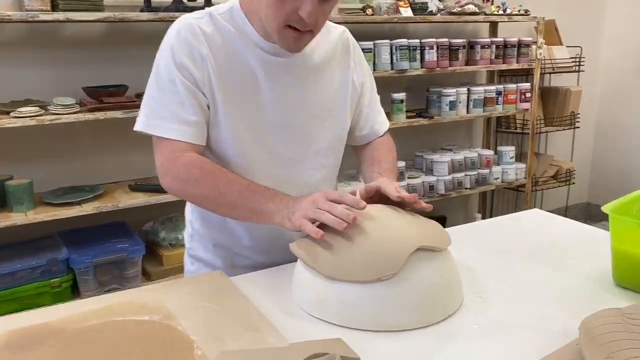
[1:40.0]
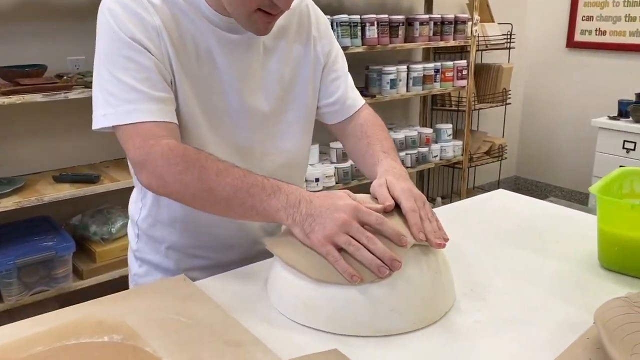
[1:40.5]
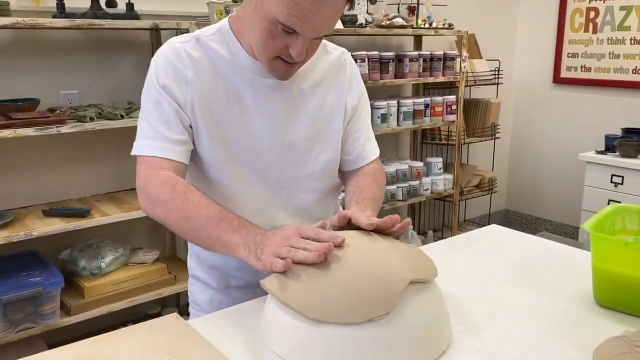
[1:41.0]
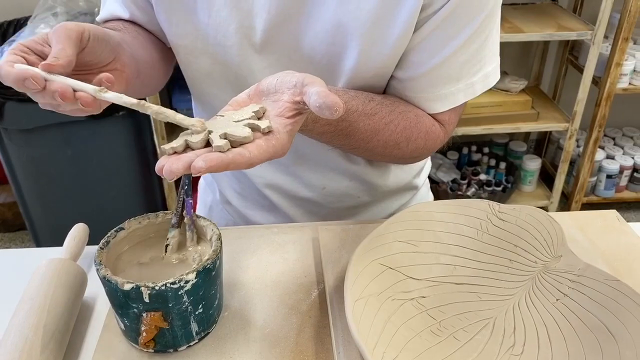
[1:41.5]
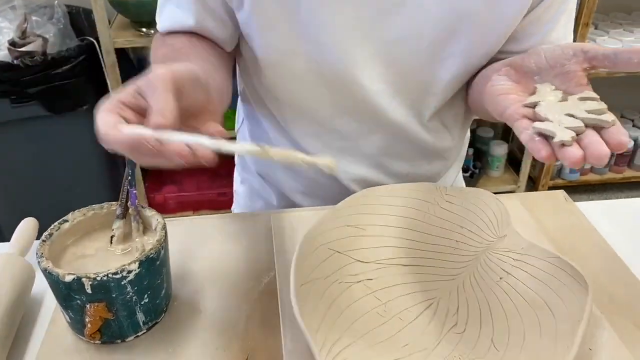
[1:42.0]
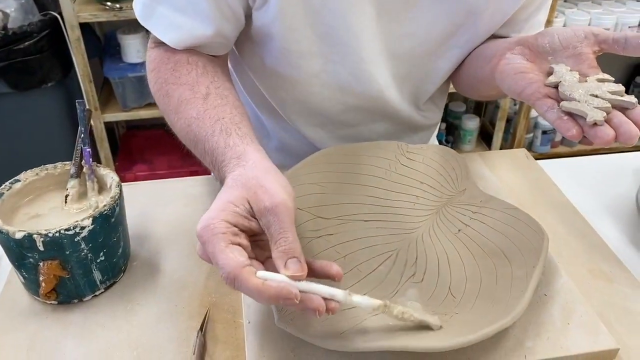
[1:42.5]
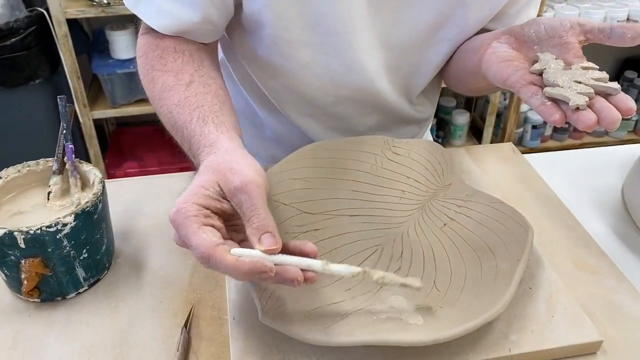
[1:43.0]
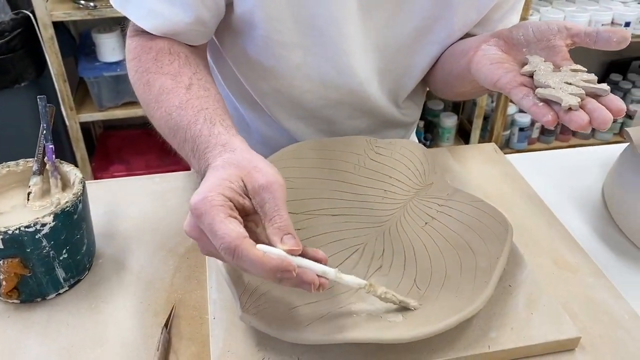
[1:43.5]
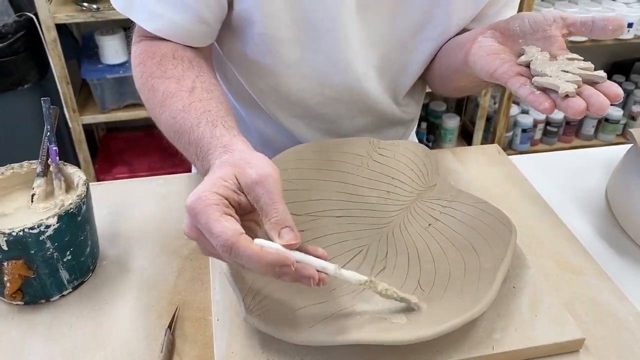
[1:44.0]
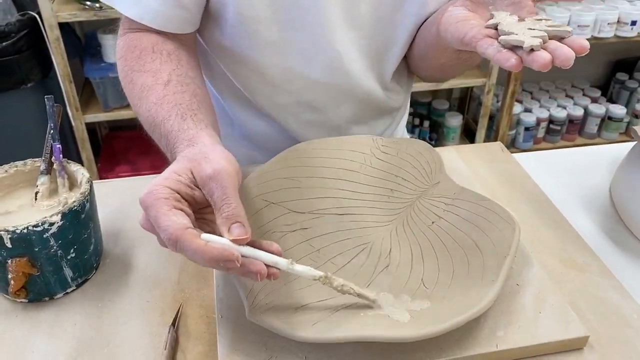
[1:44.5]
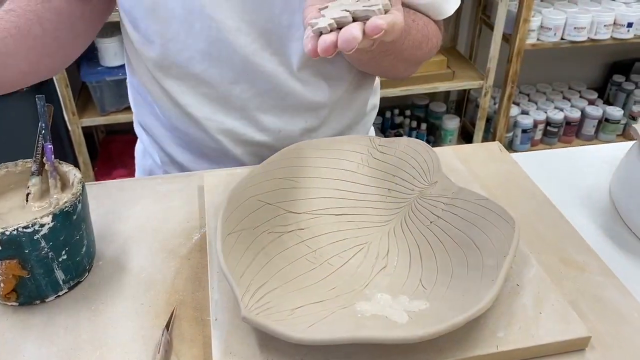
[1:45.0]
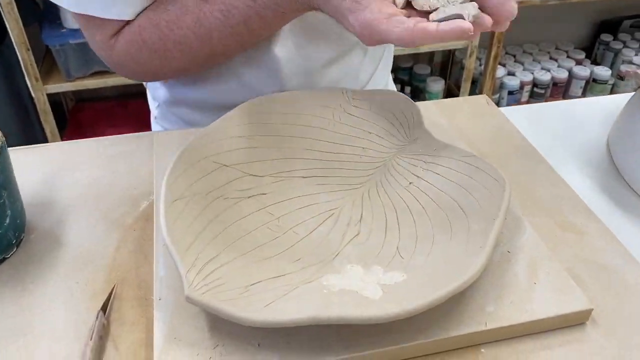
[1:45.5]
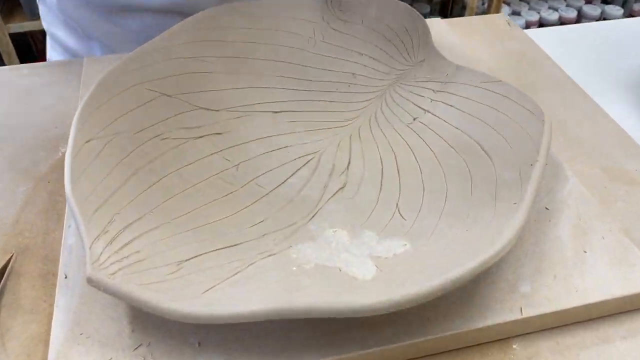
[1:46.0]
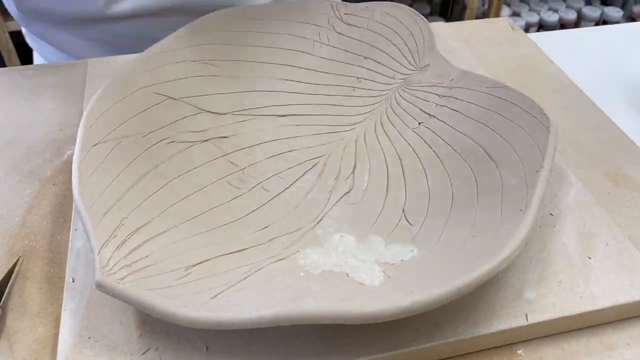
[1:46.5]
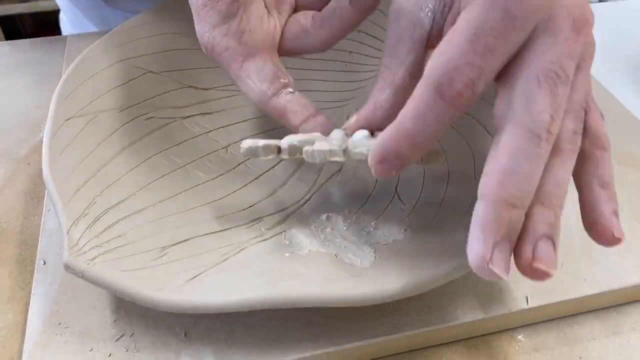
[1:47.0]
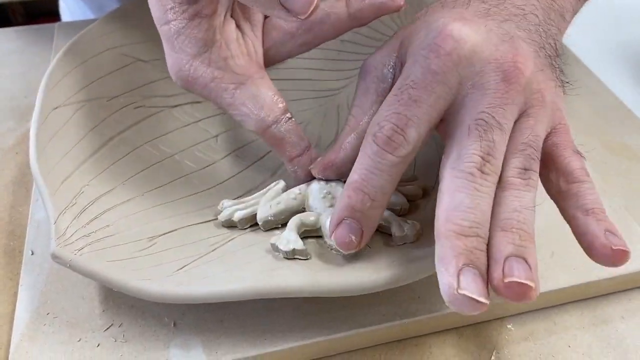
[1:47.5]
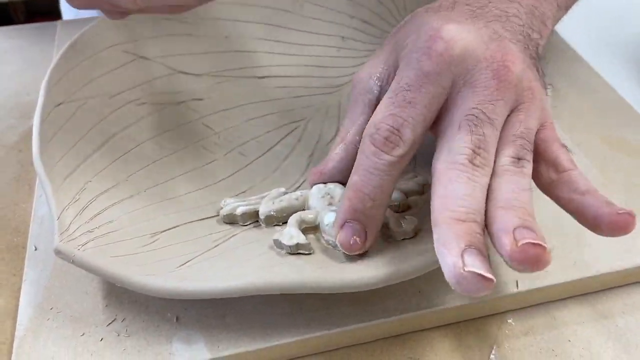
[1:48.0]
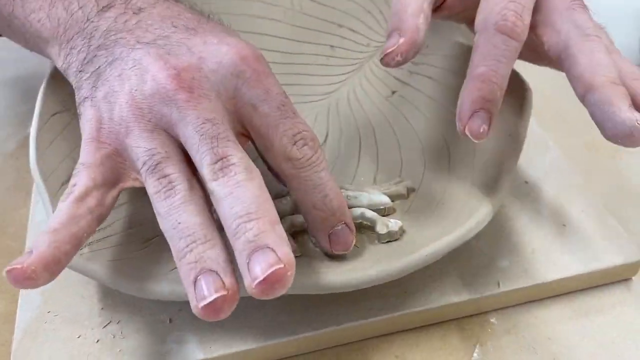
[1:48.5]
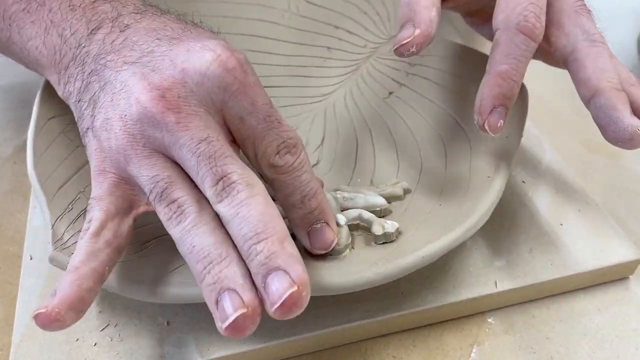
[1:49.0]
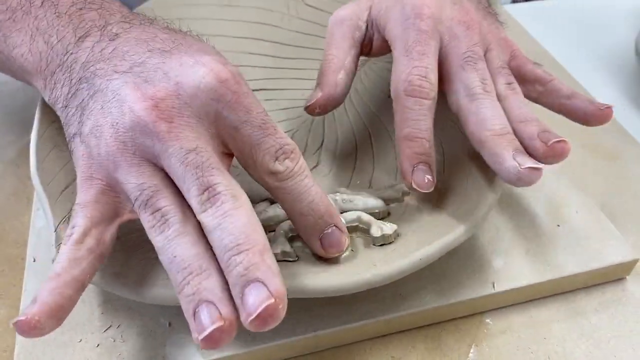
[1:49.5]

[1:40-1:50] The man keeps gently pressing the leaf-shaped structure down onto the white half circle on the table with both hands. Once he is satisfied, the scene moves to the next step: the leaf structure is sitting on the table in front of him, and he holds the frog outline in his left hand. With a paintbrush in his right hand, he presses some tan material, matching the color of the putty, onto the leaf shape. It appears to be some sort of glue or adhesive, since he then presses the frog-shaped structure into the part of the plate he has just painted. He moves it around with both hands until he is satisfied with how the frog is sitting on the plate.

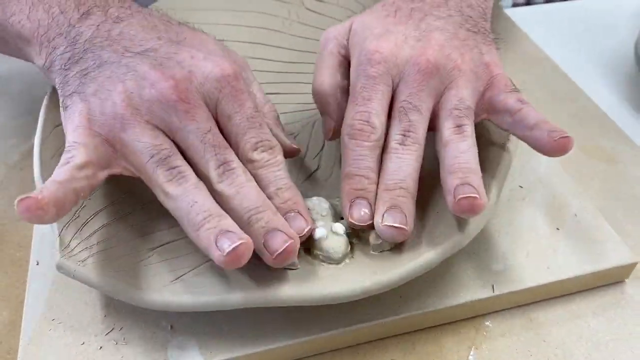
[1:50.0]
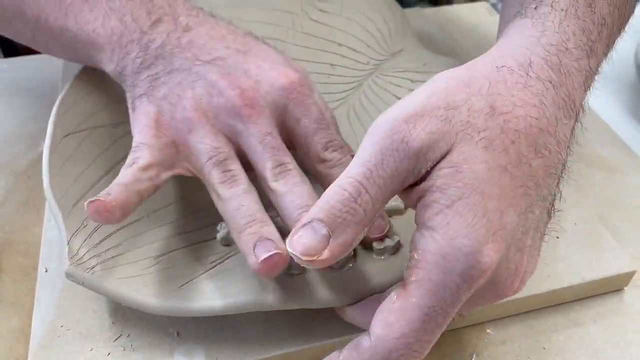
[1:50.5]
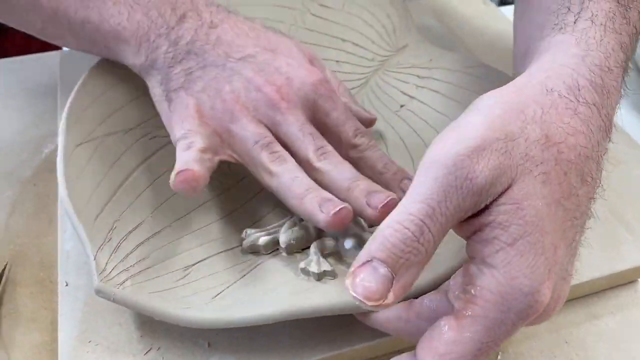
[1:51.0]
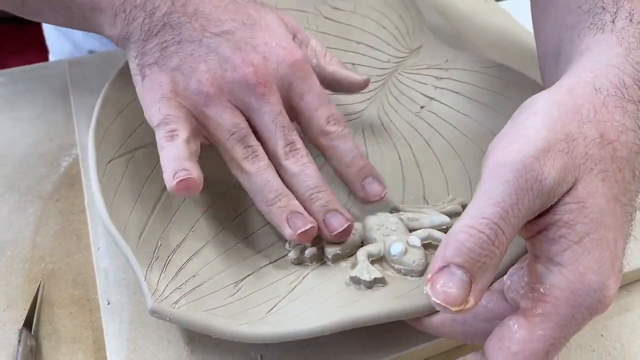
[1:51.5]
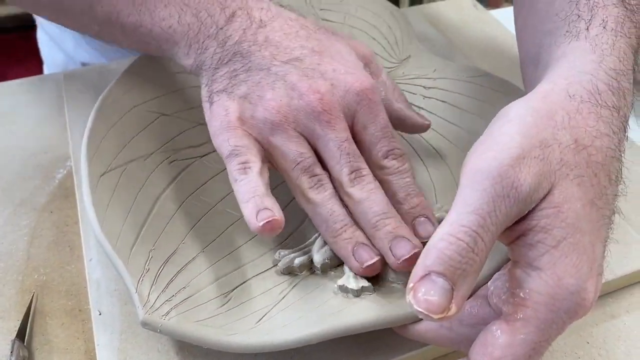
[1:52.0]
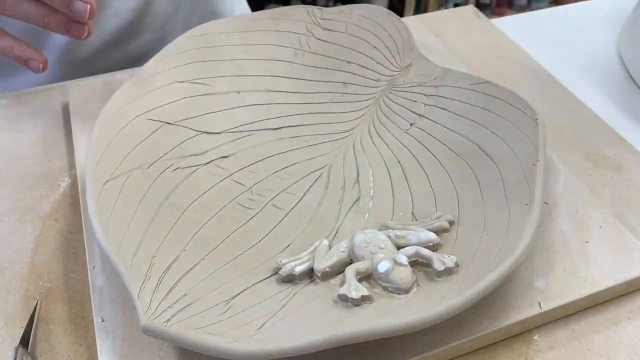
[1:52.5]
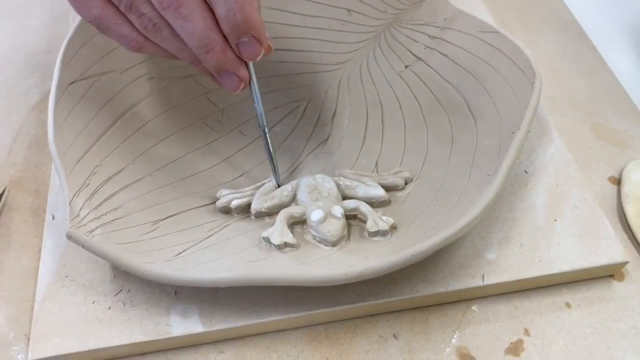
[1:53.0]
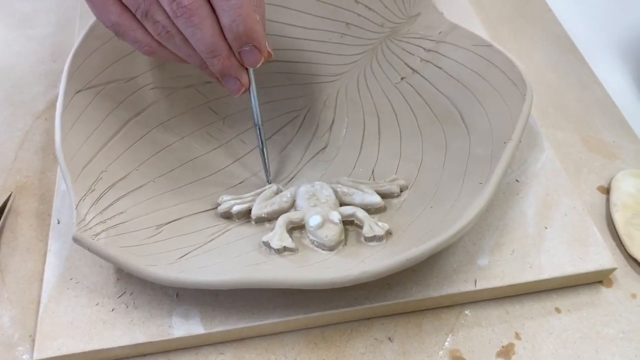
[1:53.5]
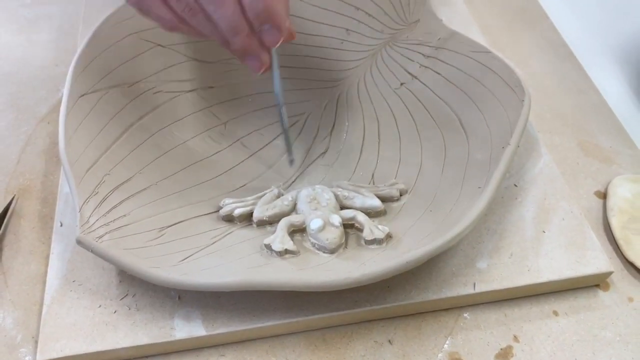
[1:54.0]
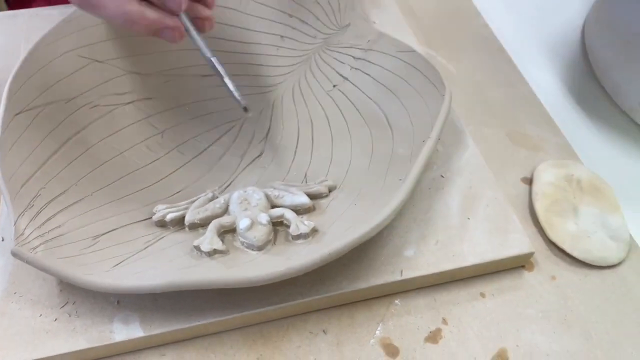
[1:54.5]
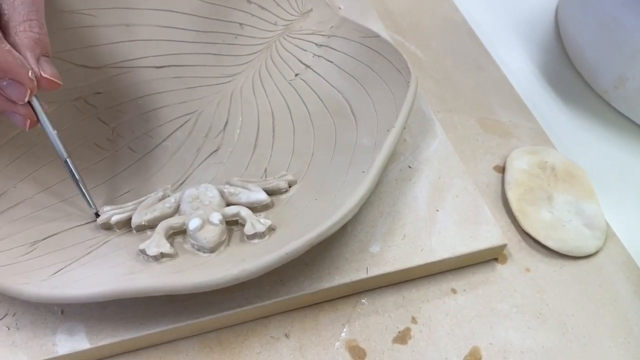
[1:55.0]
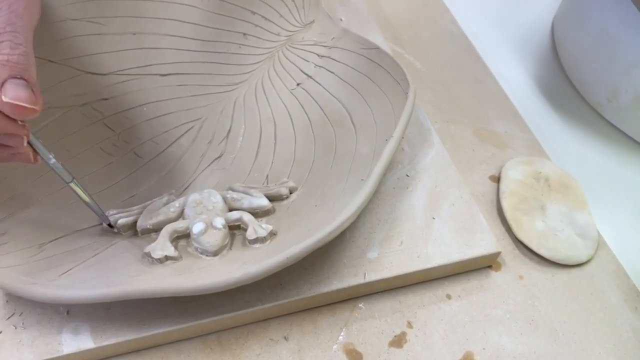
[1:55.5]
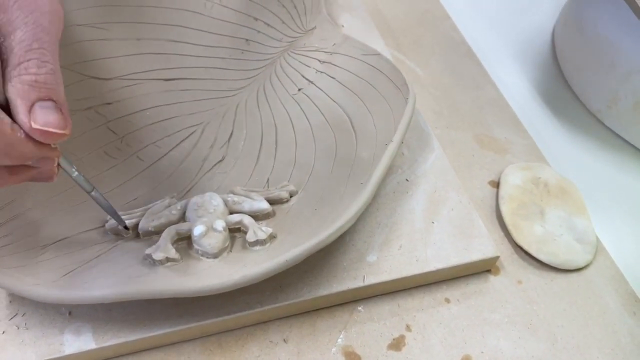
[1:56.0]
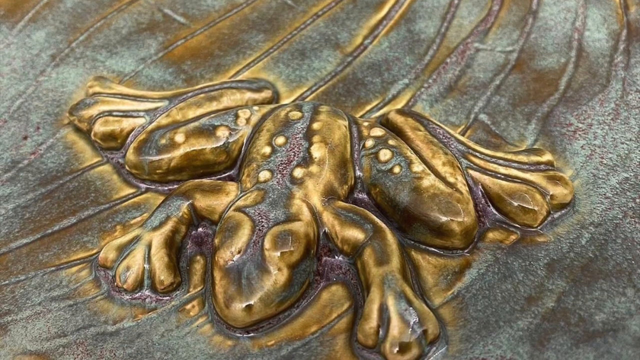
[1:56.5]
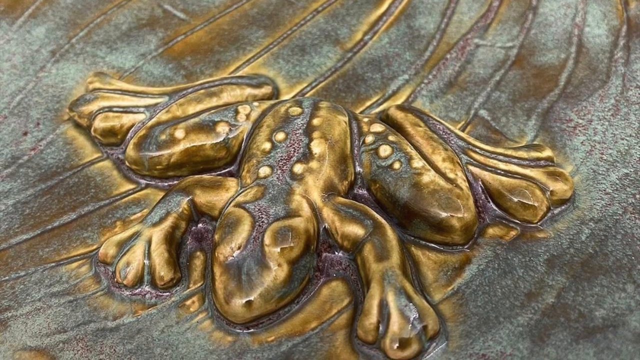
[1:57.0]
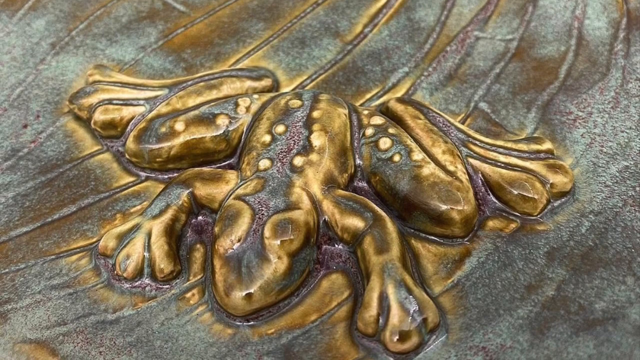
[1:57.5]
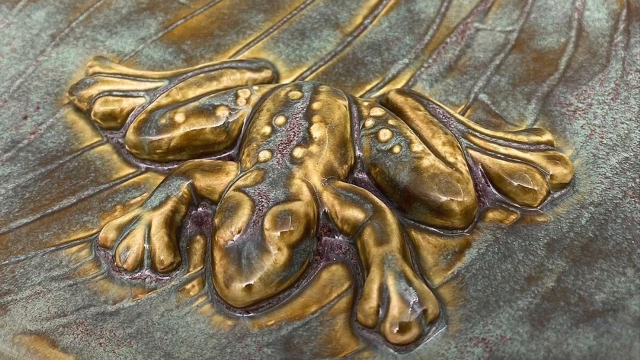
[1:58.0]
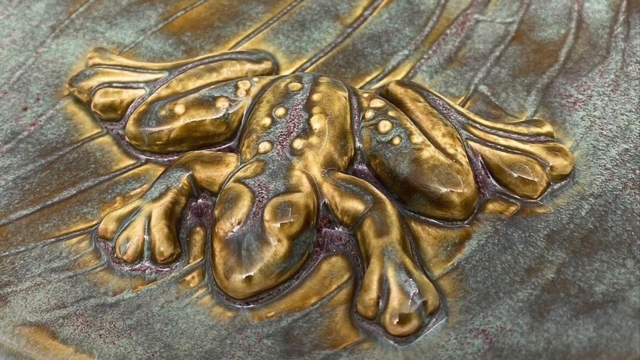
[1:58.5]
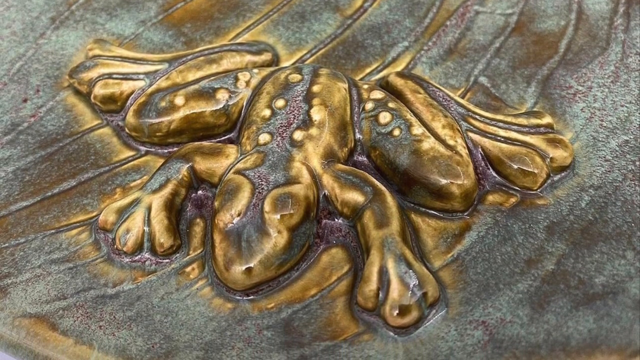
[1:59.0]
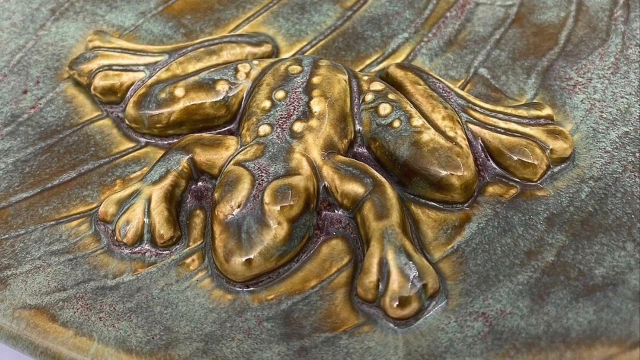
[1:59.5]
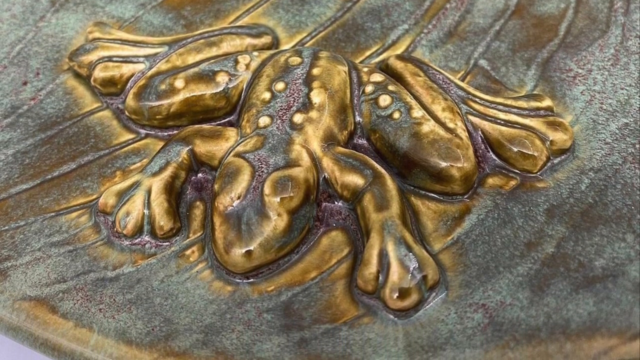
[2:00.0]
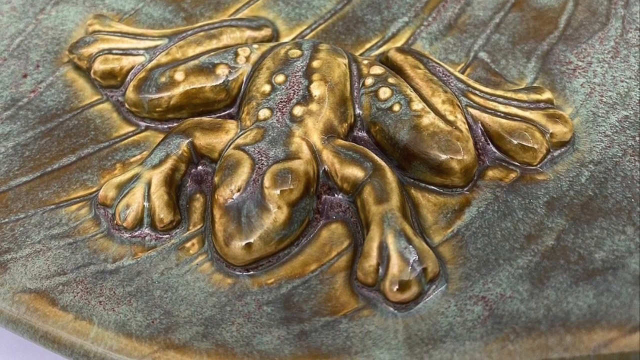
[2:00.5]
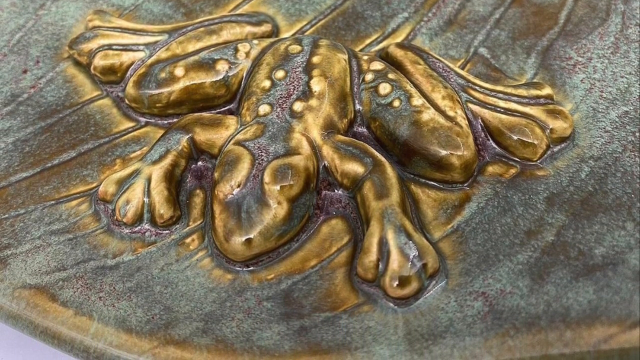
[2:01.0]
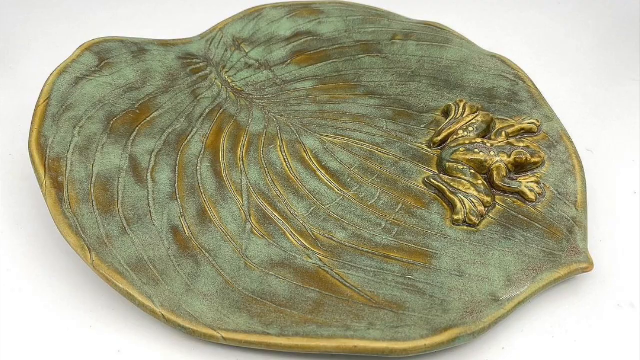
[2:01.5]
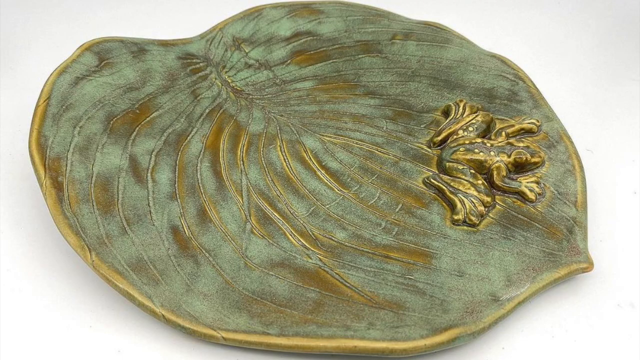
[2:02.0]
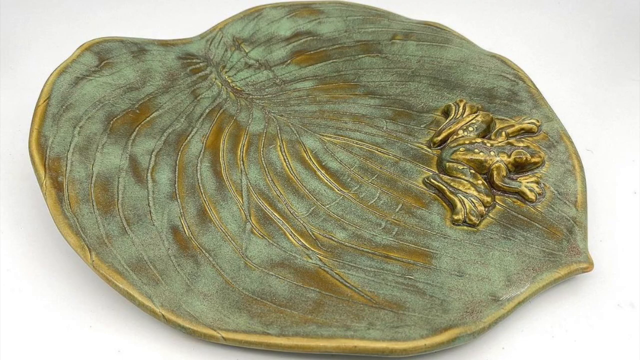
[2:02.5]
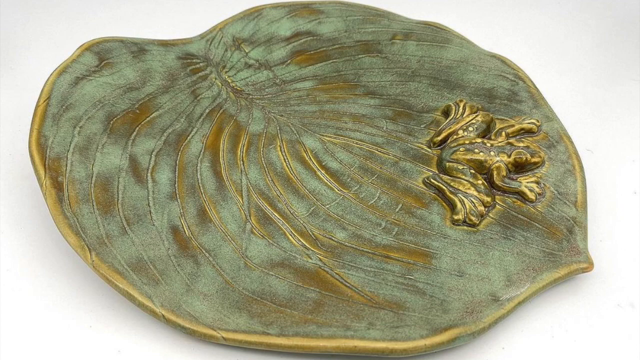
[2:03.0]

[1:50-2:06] The man continues gently pressing down on the frog with both hands so that all of it is evenly pressed into the adhesive below. He then uses a very small silver brush, held in his right hand, to move around the surface of the frog, dipping it into something on the opposite side of the frame. Next, the finished product is shown, zooming in first on the frog to show the intricacies of the artwork. The frog is now golden, green, black and gray, and appears to have hardened. The video then zooms out to show the entire finished product, a leaf-shaped plate the same color as the frog.